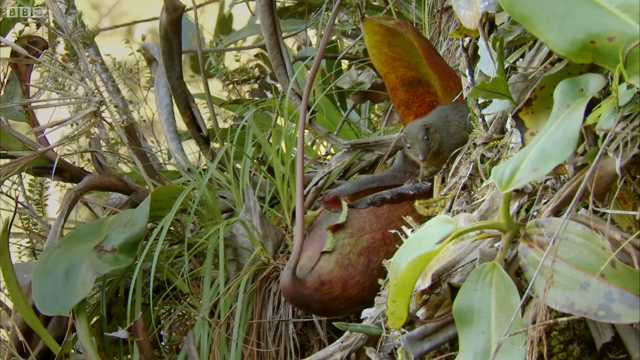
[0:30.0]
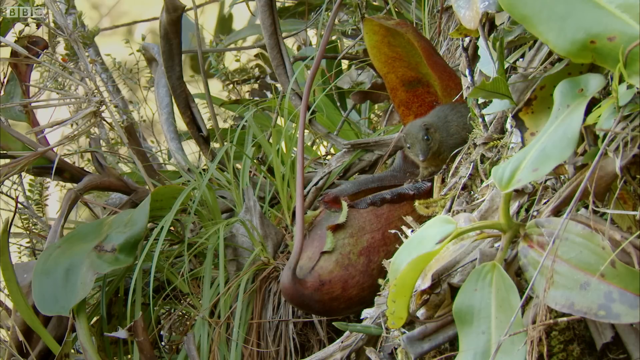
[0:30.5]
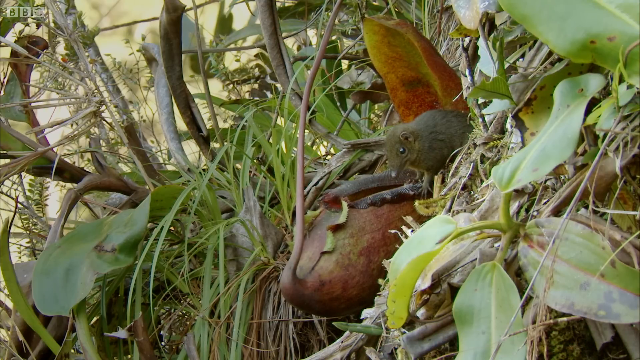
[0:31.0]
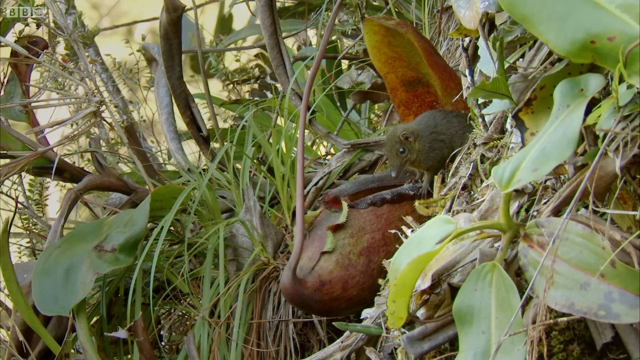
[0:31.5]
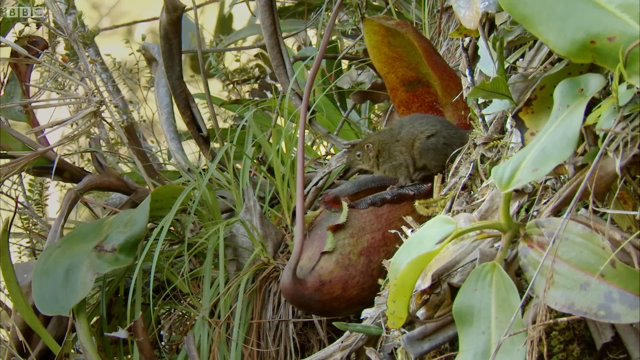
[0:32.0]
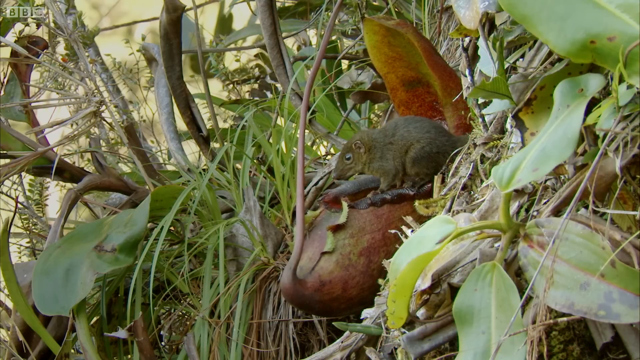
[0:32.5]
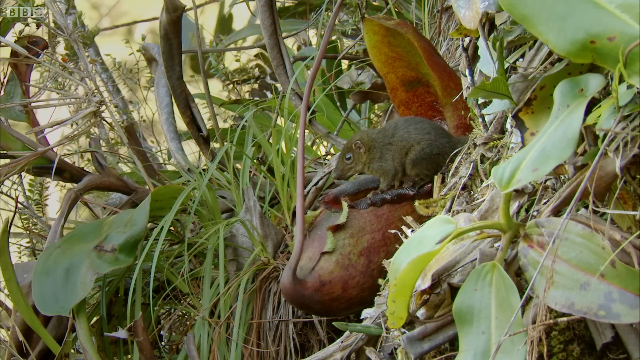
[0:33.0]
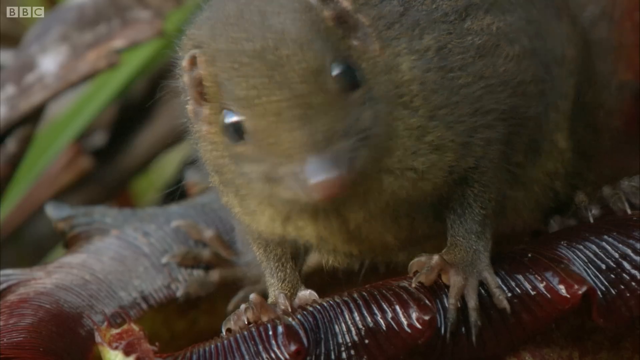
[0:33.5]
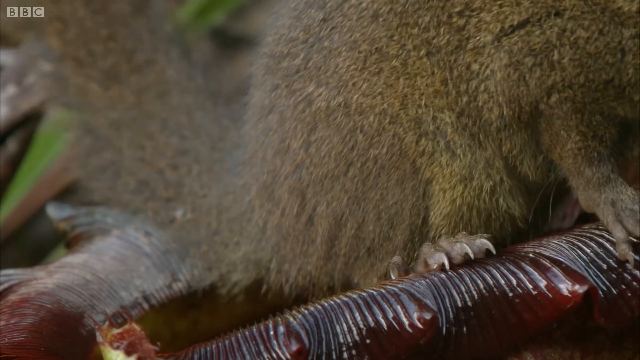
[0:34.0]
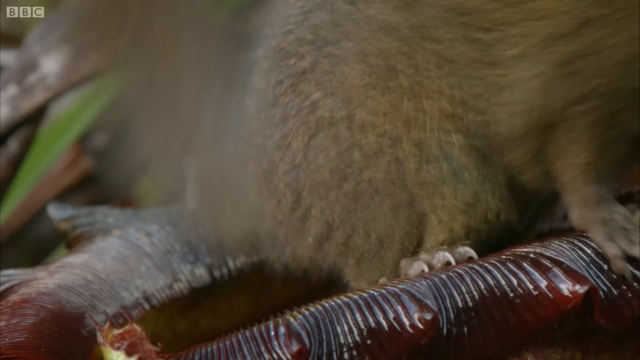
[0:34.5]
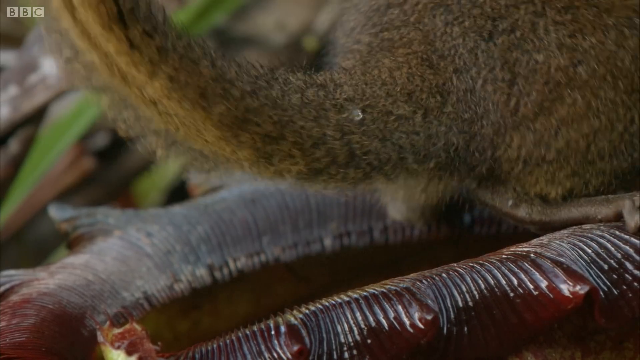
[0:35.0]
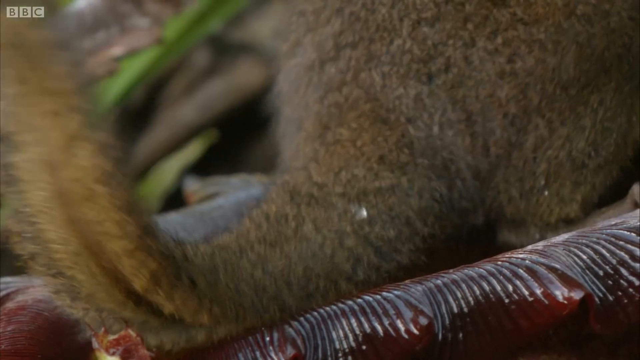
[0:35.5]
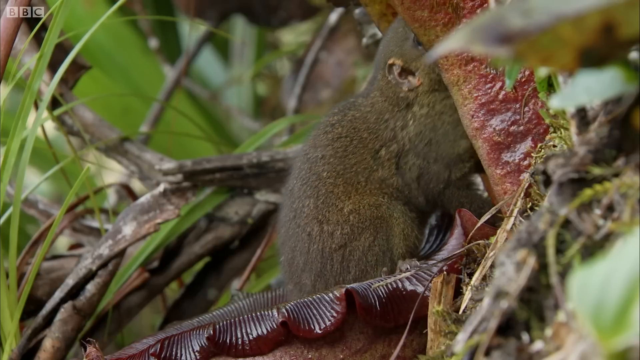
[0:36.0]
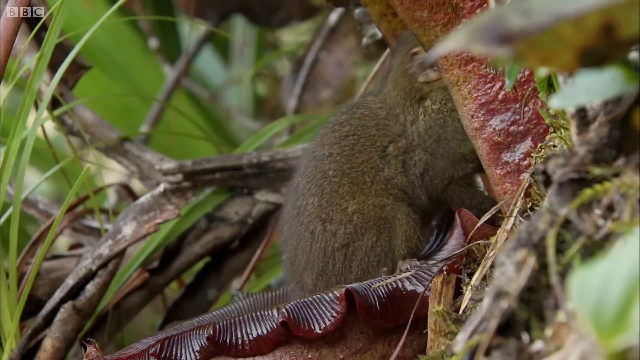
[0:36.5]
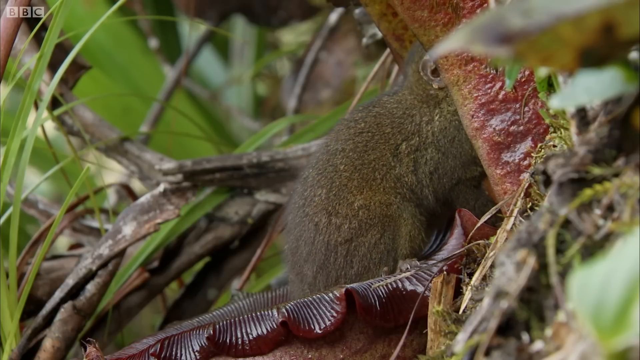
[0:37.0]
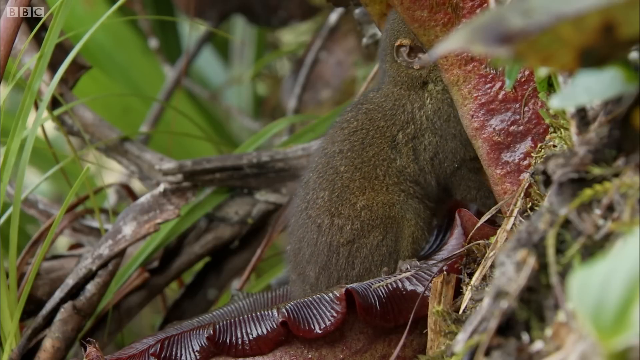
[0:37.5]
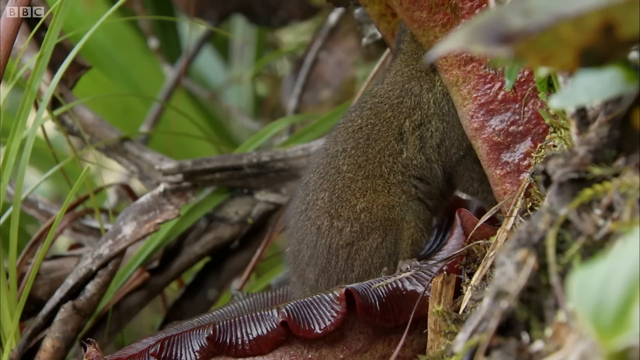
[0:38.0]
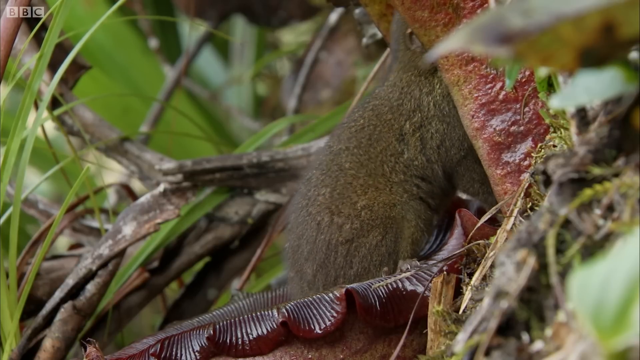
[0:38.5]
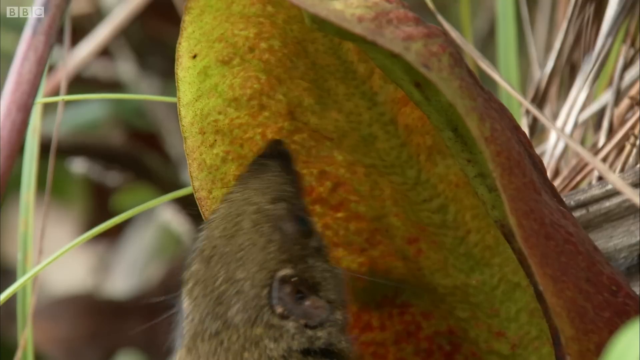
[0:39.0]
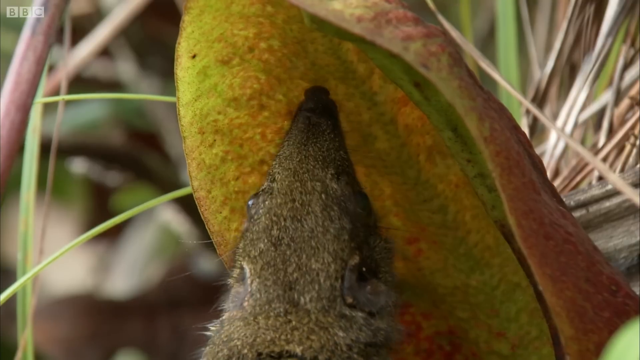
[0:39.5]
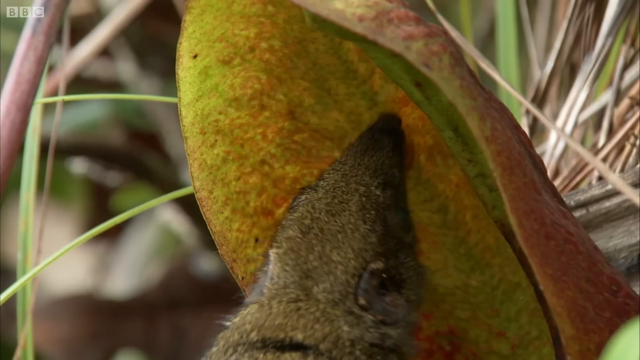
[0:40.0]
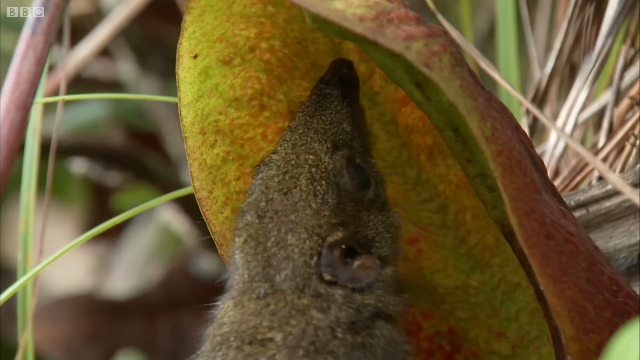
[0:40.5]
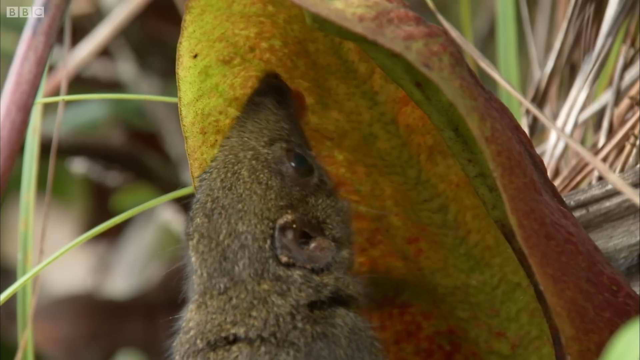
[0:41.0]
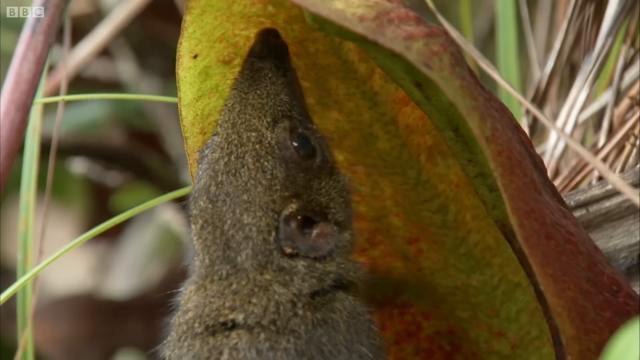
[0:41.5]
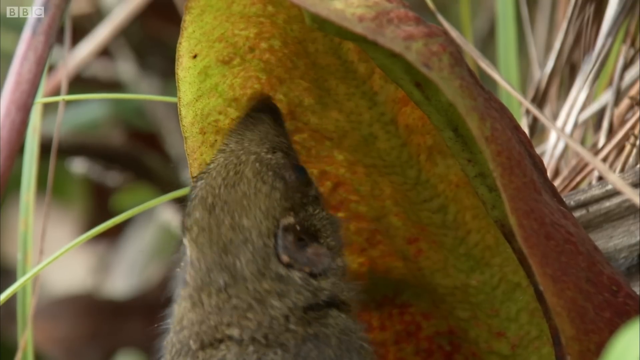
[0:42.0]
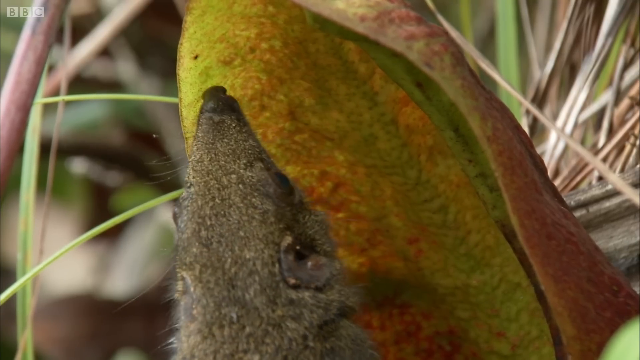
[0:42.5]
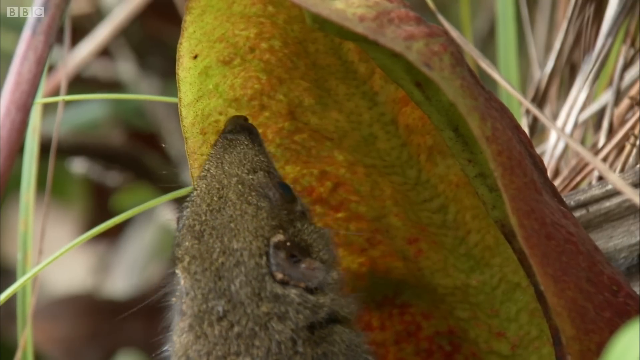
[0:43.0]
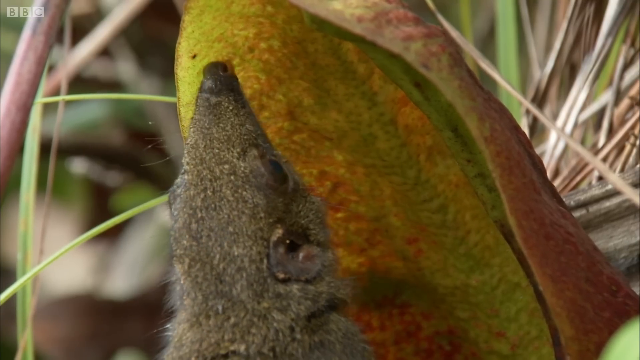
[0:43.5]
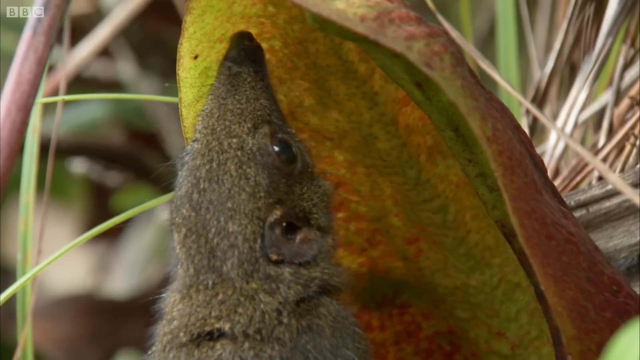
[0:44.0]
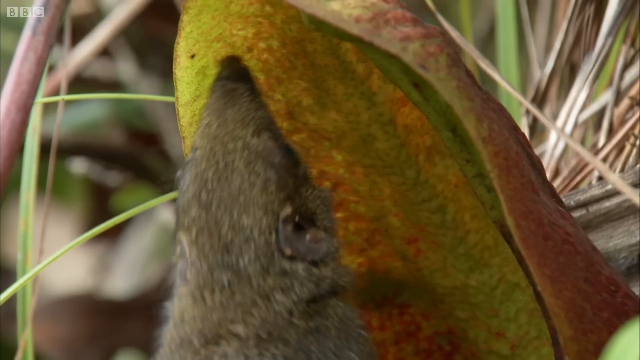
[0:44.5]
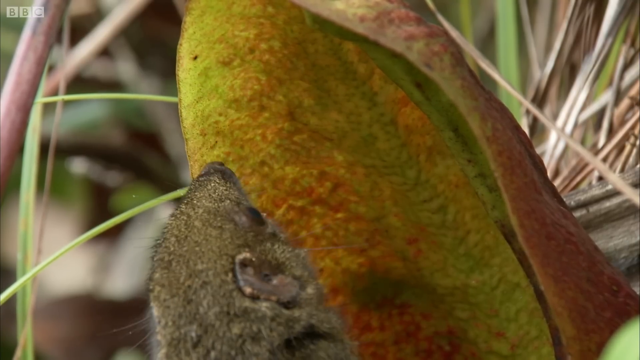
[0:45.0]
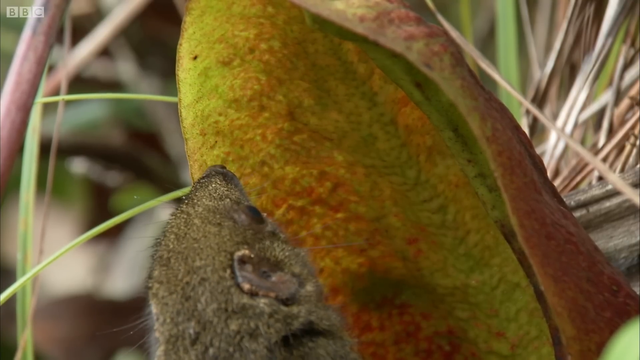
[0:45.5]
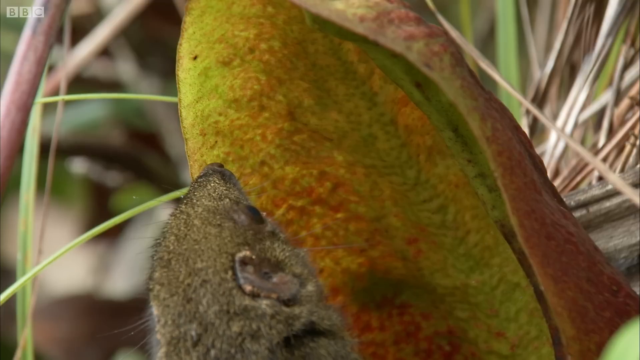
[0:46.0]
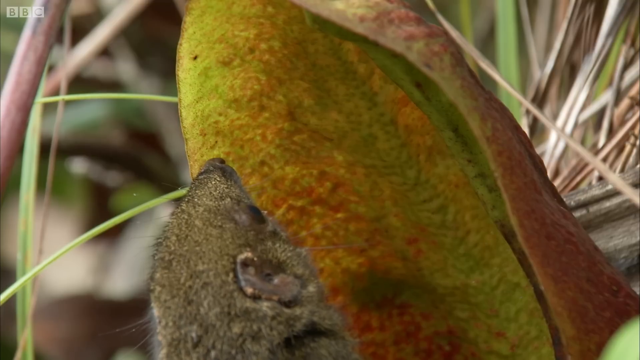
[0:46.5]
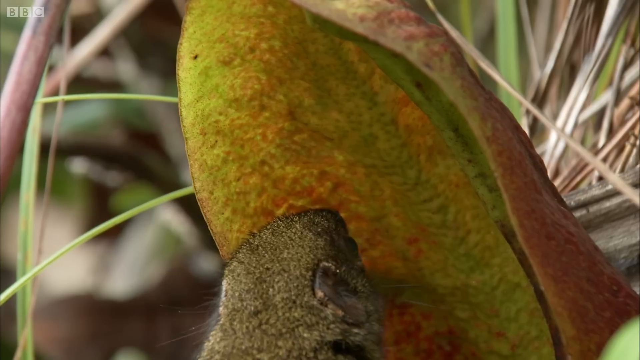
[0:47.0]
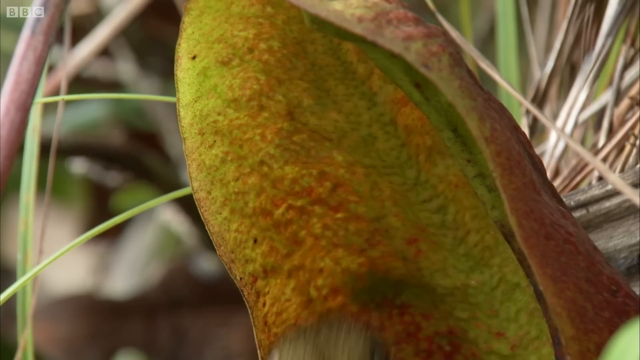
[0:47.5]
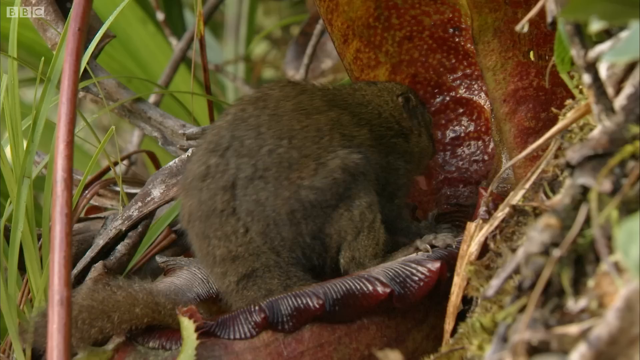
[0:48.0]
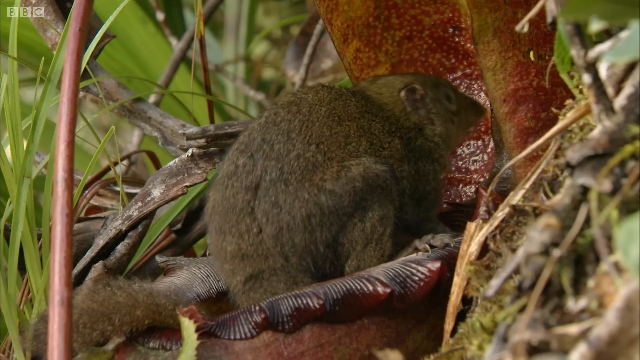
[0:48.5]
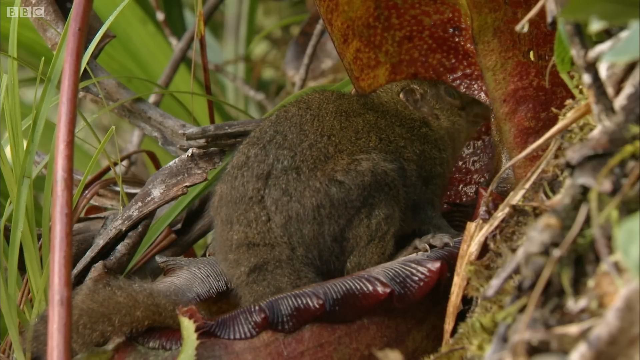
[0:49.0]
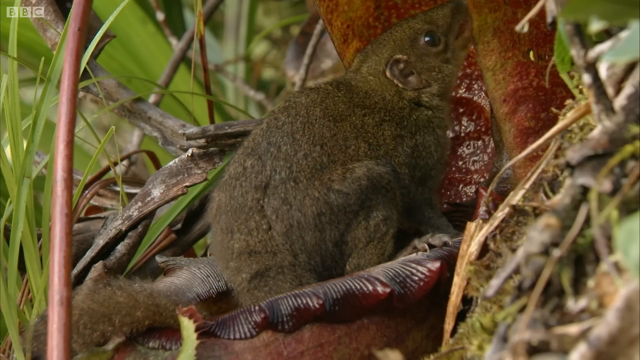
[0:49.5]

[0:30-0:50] A zoomed-in shot shows the small mammal inside the plant. Here the mammal looks more like a squirrel, with a long thin face, a long thick bushy tail, large black eyes, and small human-like ears on the sides of its head. It licks the inside of the leaf with a long pink tongue. The mammal is sitting on the edge of the bottom of the plant, which appears almost like a bowl; the plant is large enough that the mammal could fit all the way inside the bowl. The mammal adjusts its body, then continues licking the bottom of the leaf.